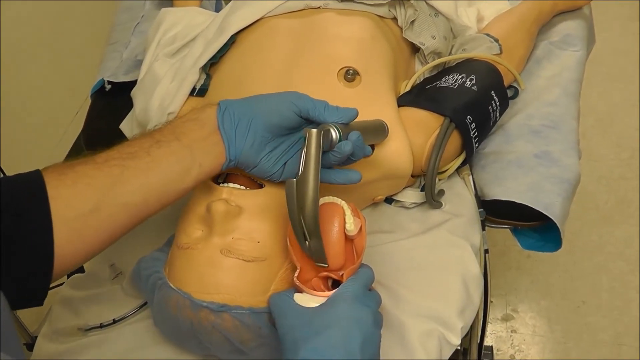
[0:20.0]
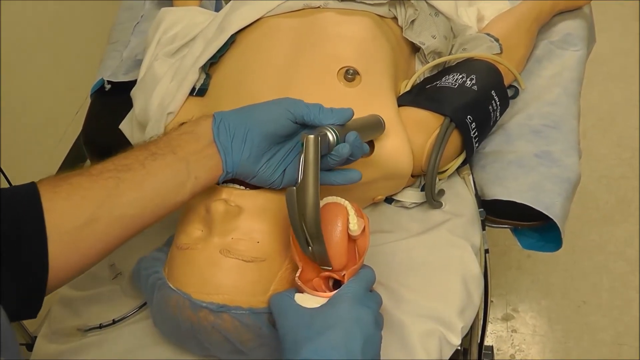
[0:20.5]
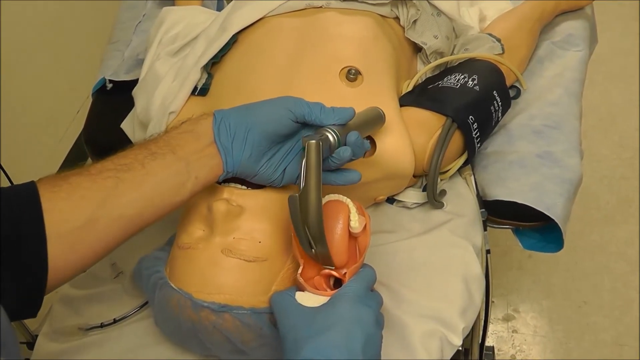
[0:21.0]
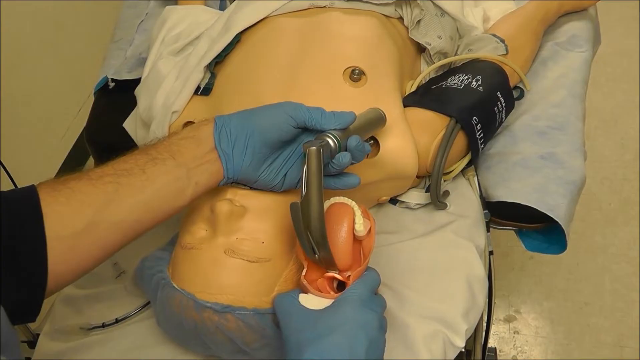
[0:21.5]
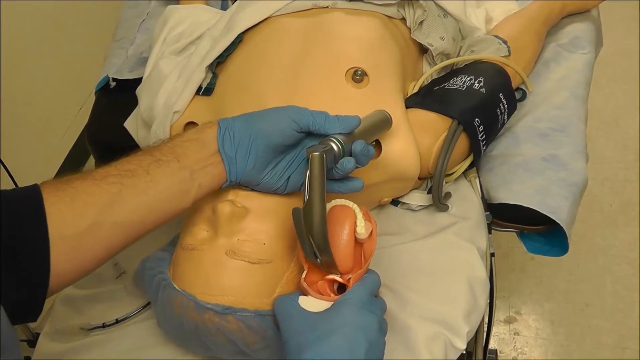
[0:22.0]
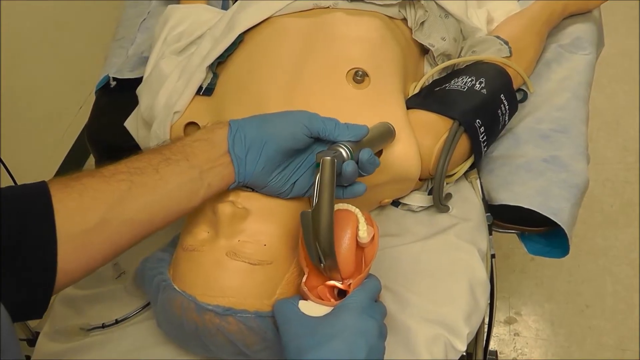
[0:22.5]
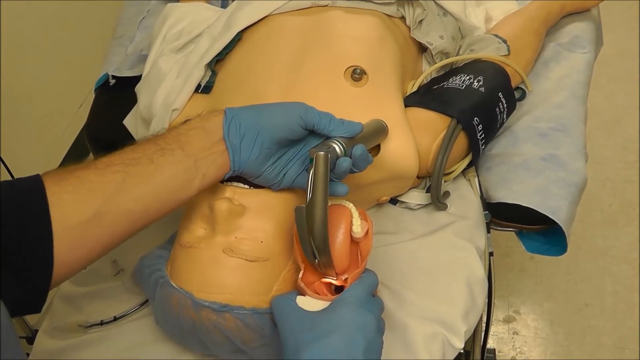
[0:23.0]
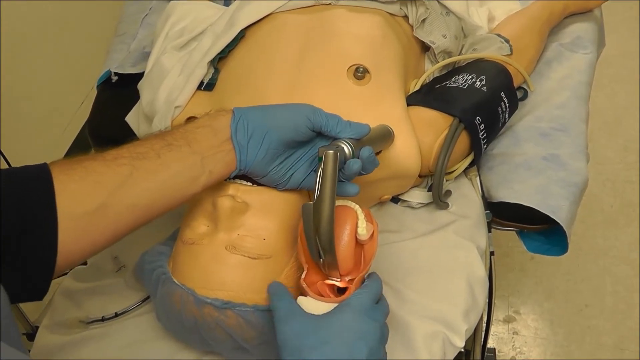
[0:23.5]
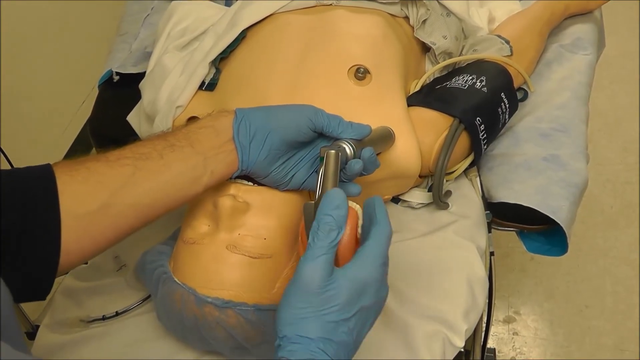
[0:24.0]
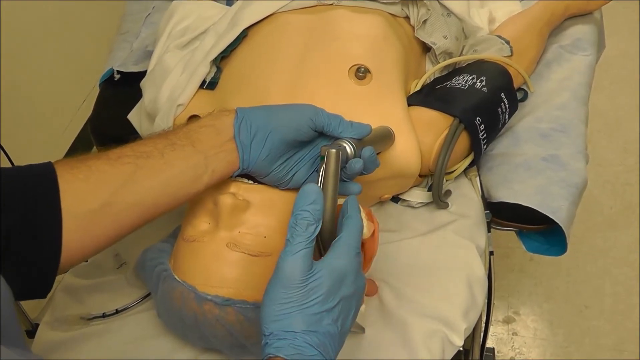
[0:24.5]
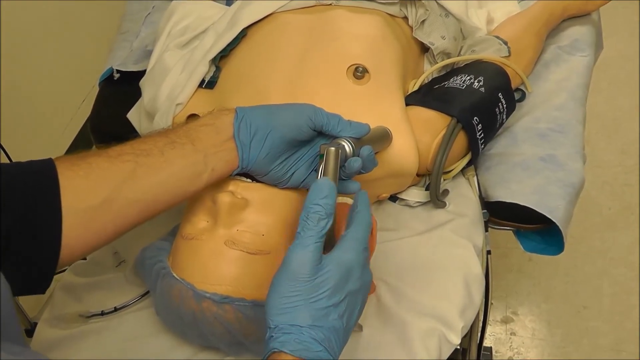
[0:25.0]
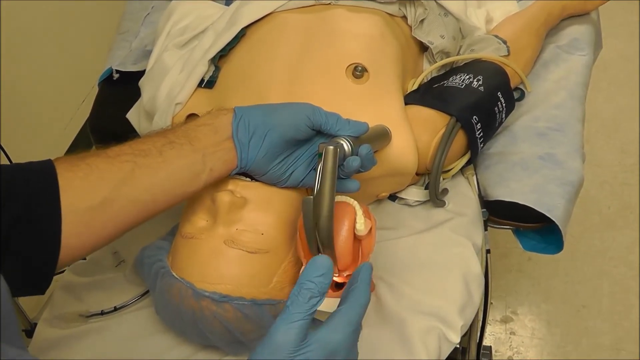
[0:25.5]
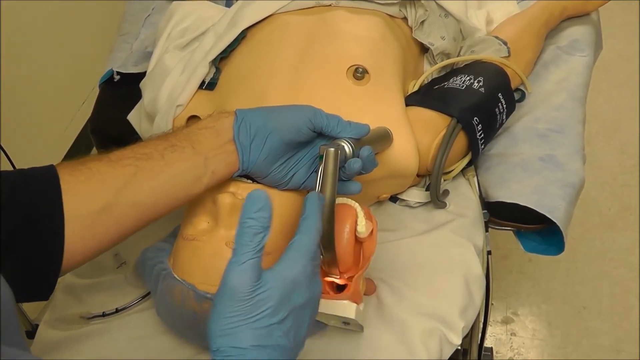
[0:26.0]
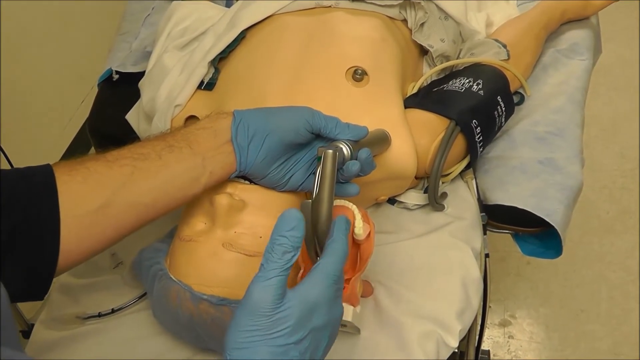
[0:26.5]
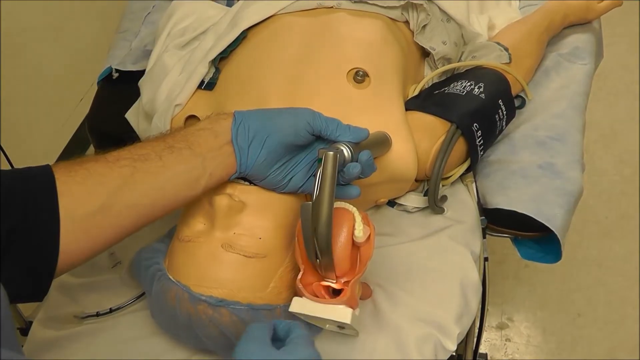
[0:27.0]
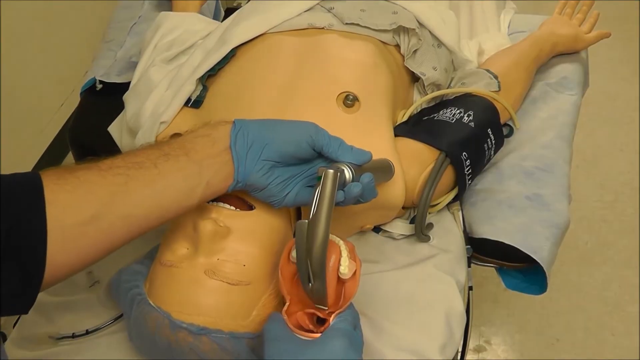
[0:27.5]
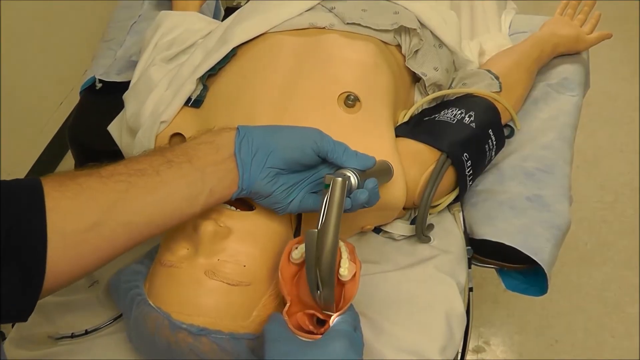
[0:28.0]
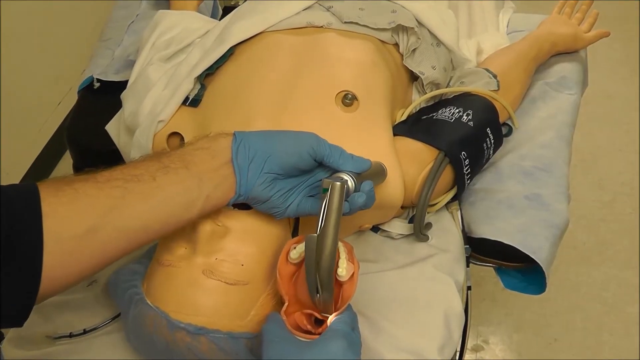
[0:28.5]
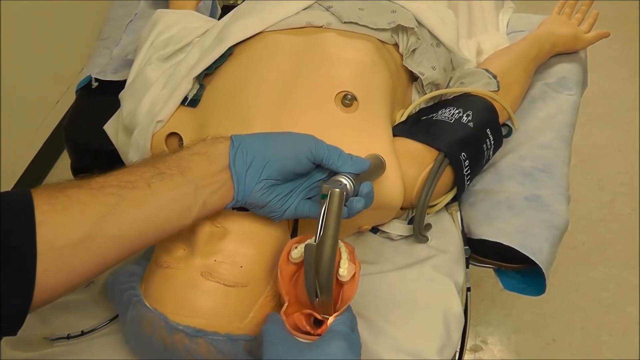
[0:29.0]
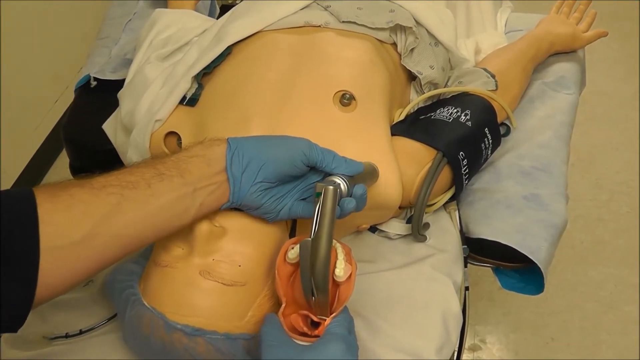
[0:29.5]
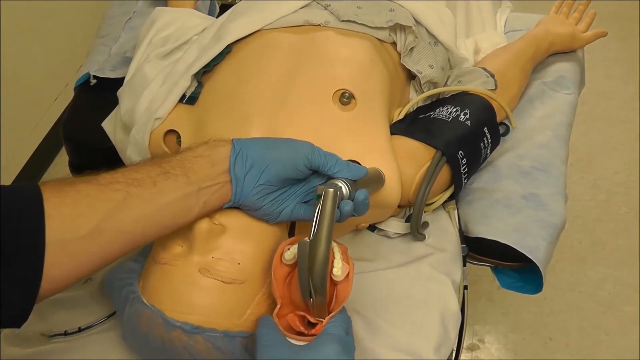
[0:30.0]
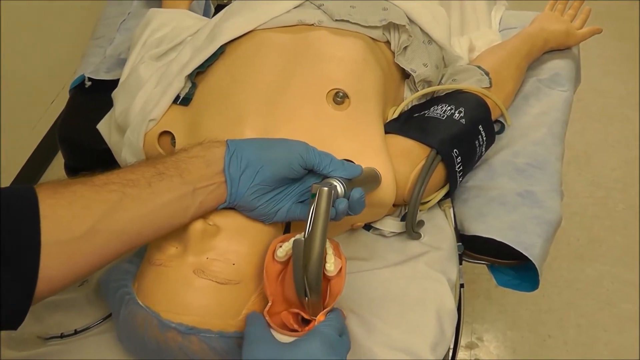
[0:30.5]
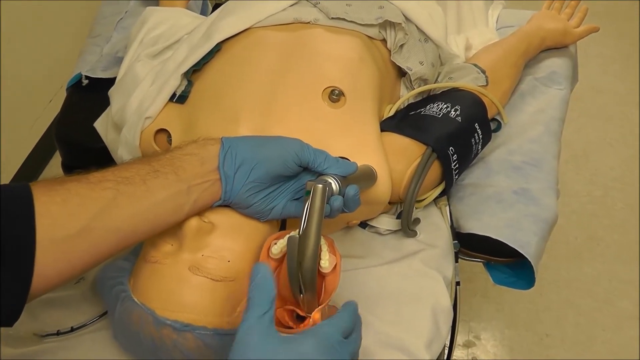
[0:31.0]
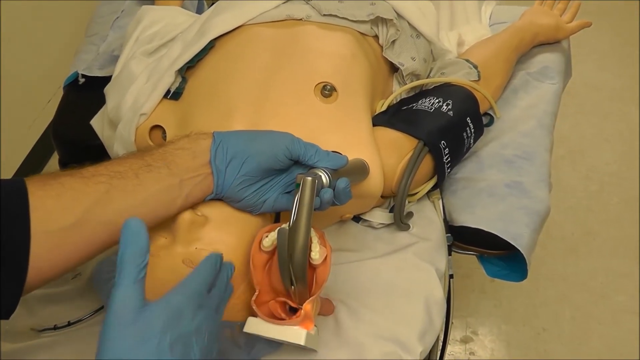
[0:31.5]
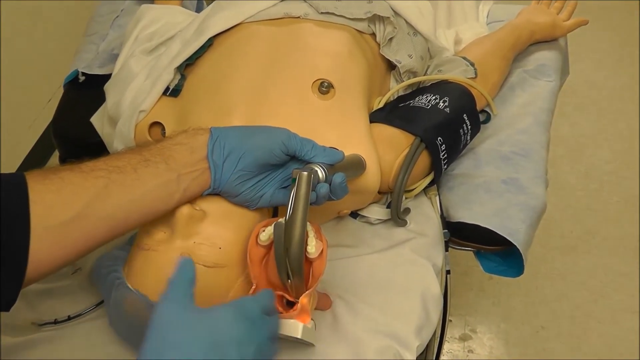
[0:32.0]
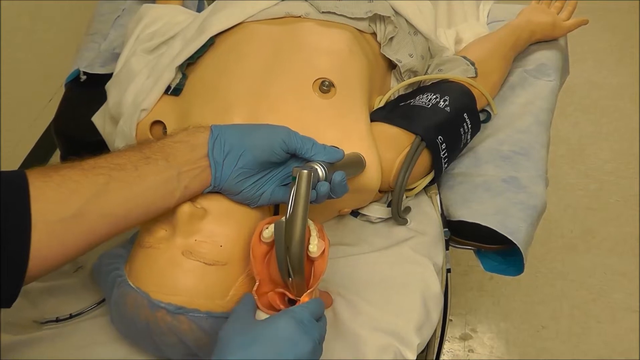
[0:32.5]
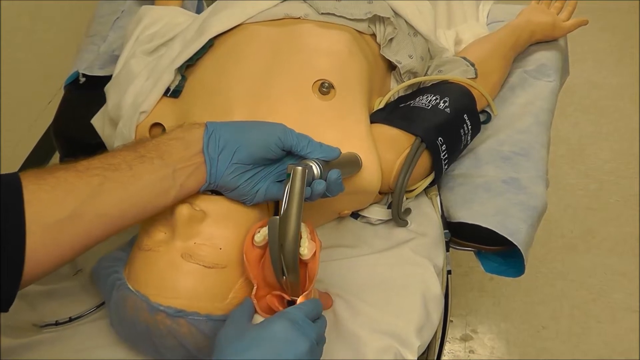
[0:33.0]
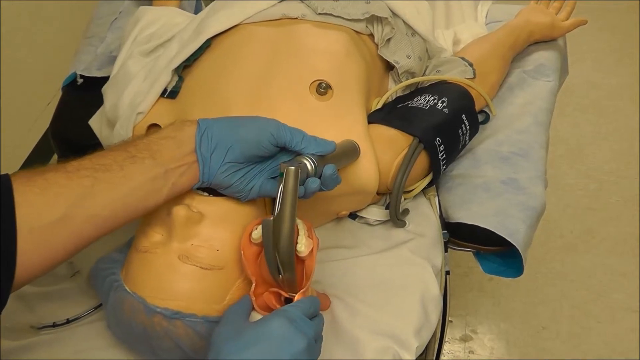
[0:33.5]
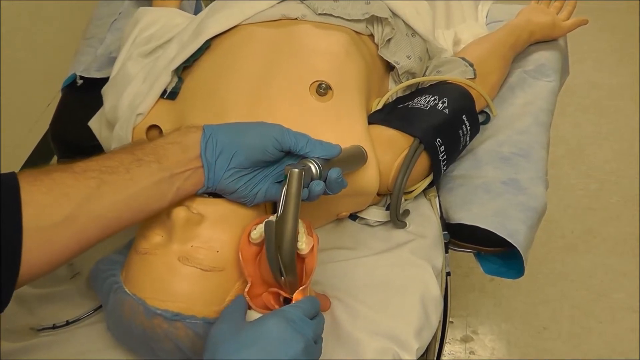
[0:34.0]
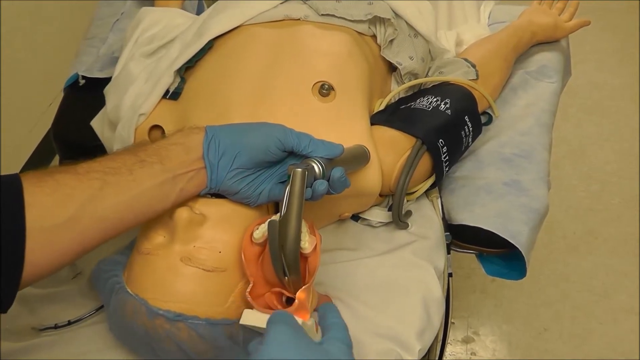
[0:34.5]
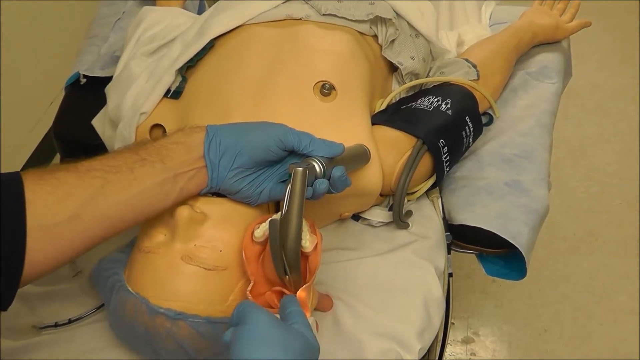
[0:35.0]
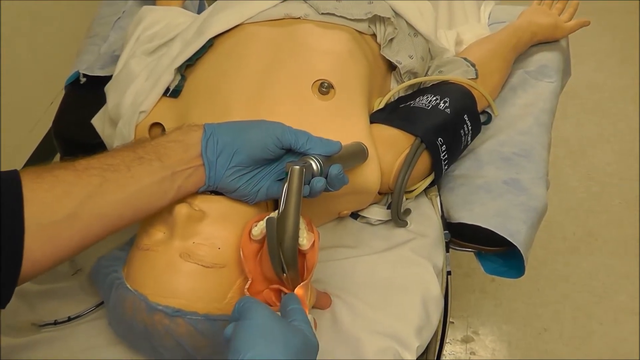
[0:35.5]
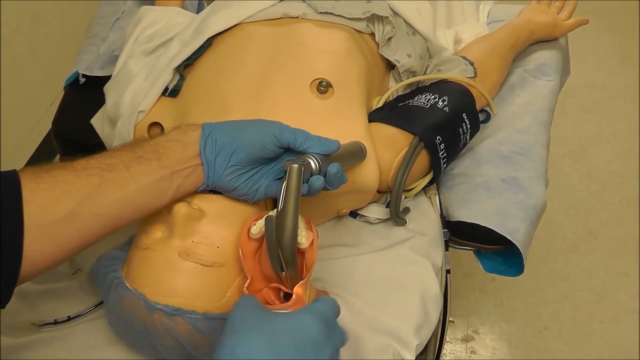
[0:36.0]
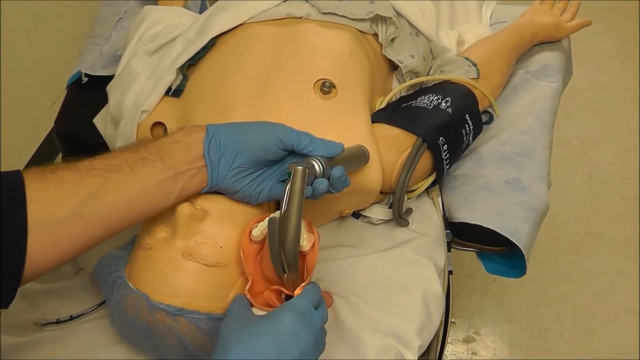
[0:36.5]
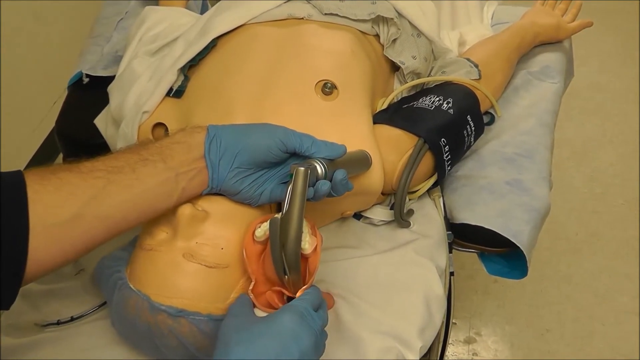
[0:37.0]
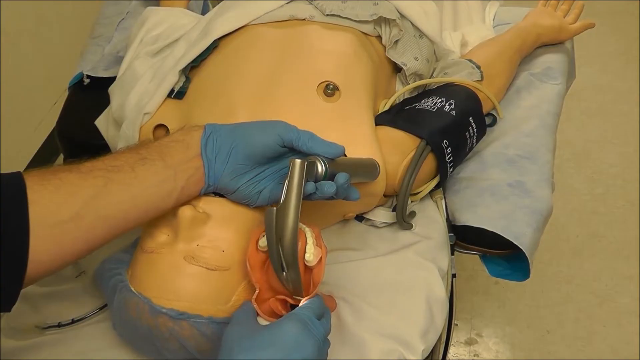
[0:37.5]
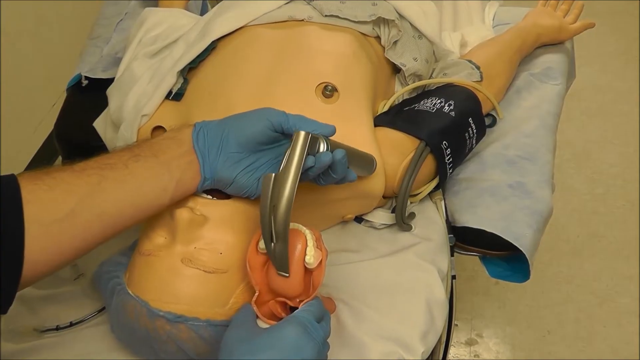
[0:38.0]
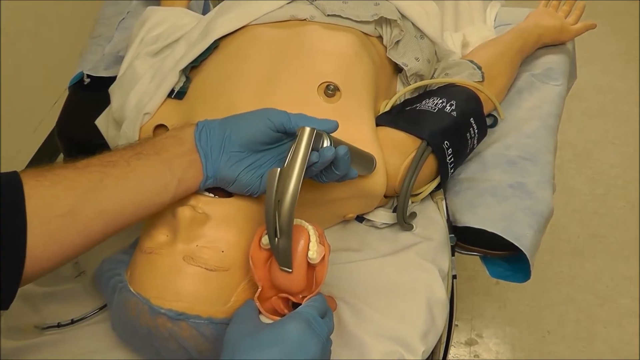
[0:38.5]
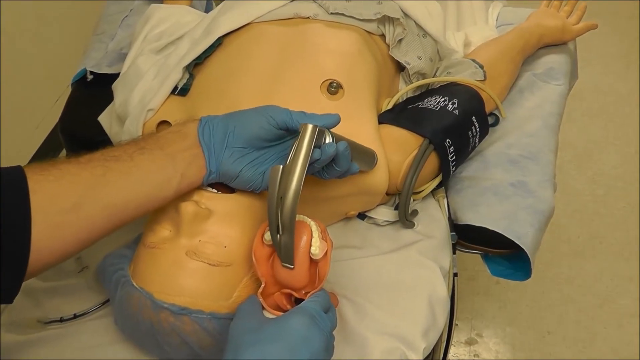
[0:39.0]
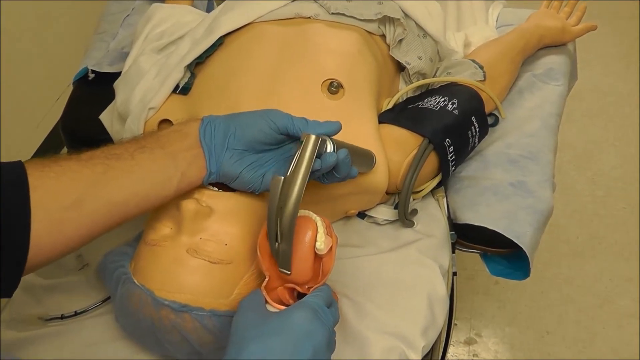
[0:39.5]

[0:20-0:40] The dummy lies on the gurney, and only the hands of the person doing the mac intubation are visible. A model of the mouth is shown, and a gray instrument is inserted into it over the tongue on the right side into the back of the throat. The person wears blue gloves. The dummy has blue netting on its head, a blood pressure cup, and two holes in the chest, one above the other, and wears something like a white shirt that is partially on and partially off. The dummy's mouth is open and its eyes are closed. The person raises a hand to the side of the mouth, appearing to show which side the instrument needs to be inserted on.